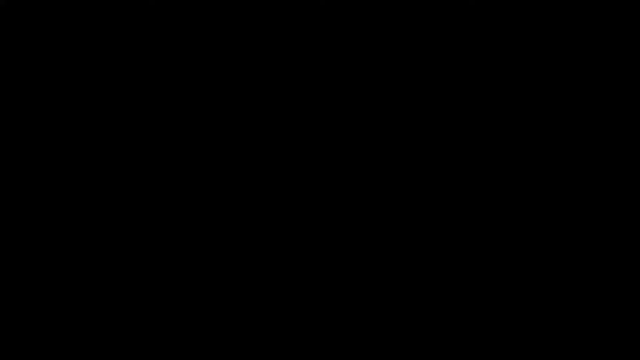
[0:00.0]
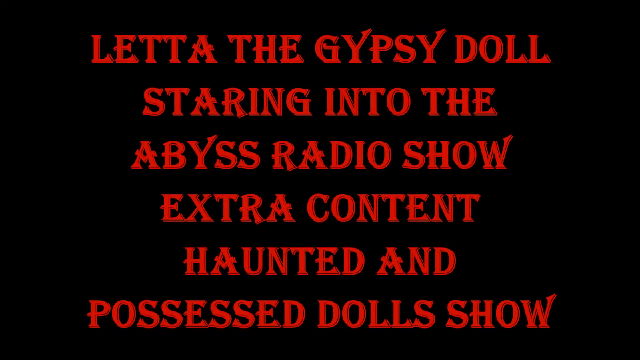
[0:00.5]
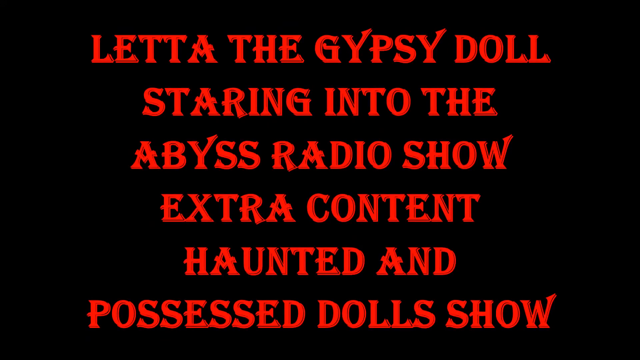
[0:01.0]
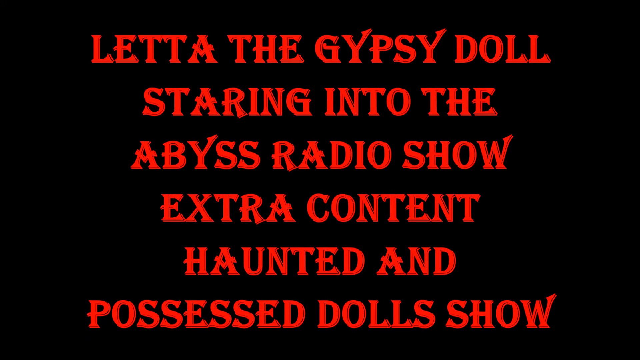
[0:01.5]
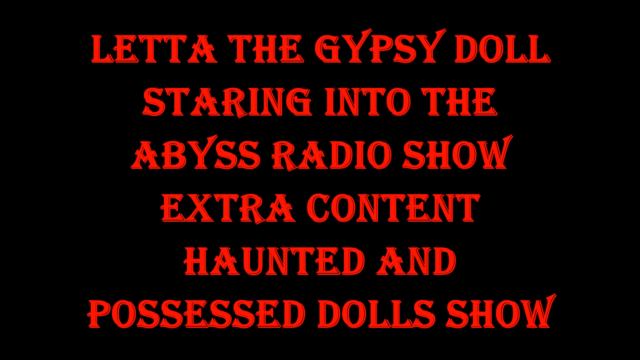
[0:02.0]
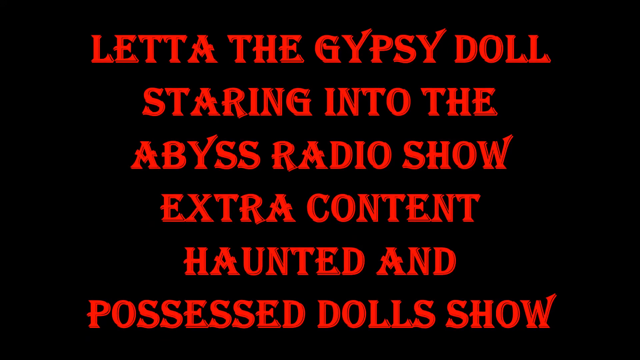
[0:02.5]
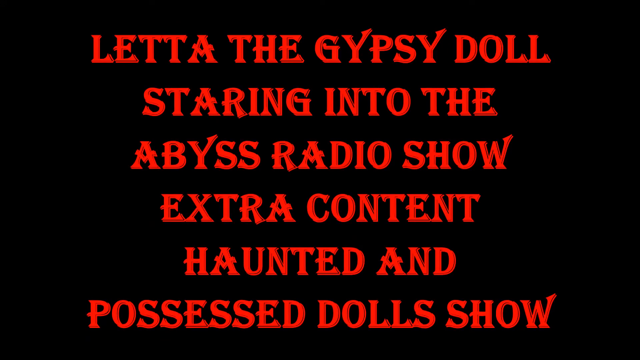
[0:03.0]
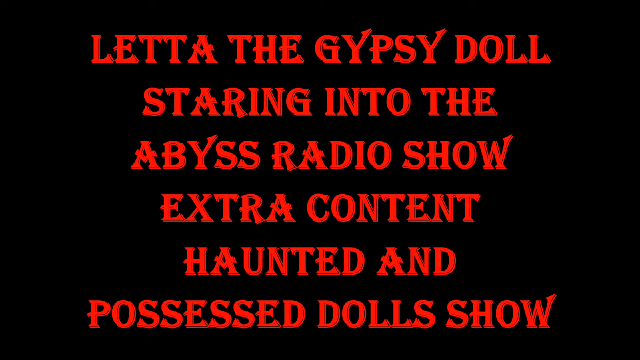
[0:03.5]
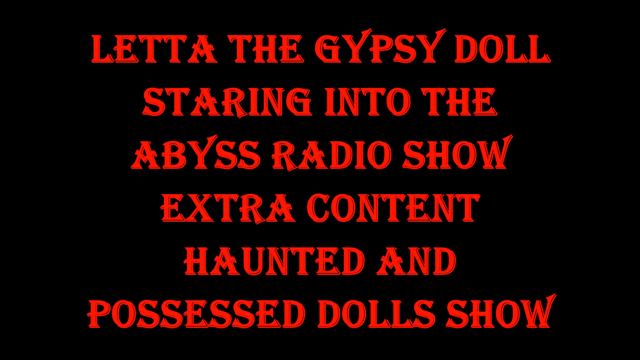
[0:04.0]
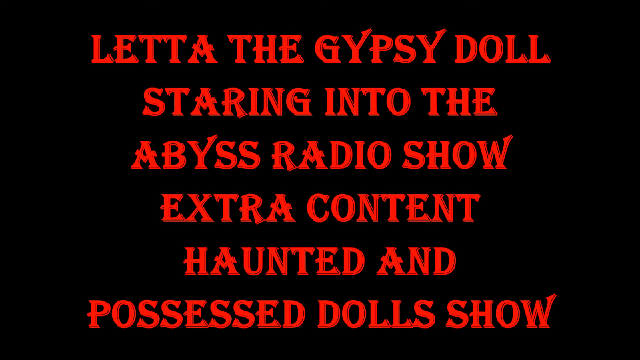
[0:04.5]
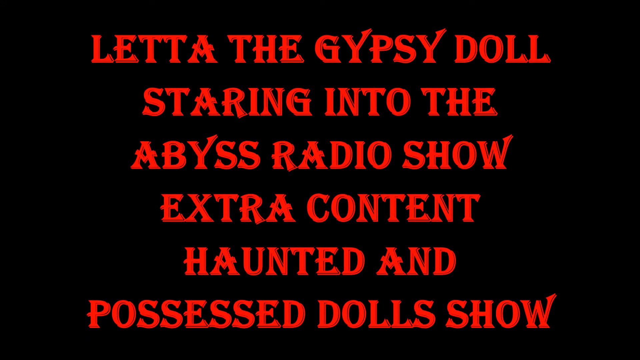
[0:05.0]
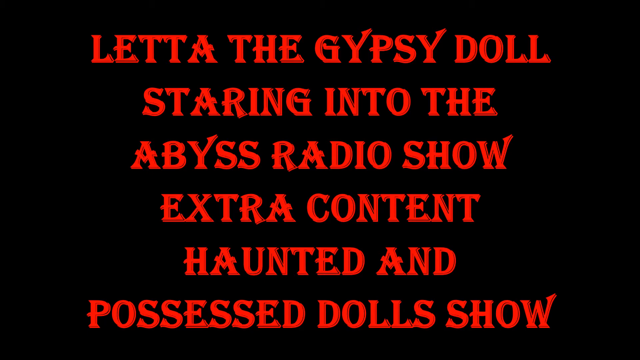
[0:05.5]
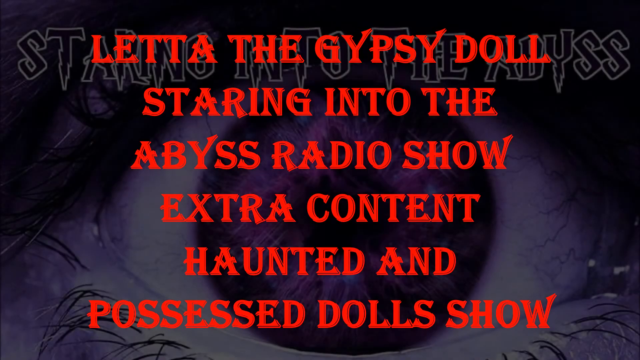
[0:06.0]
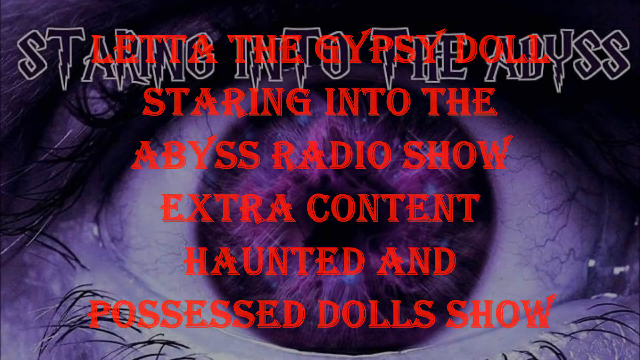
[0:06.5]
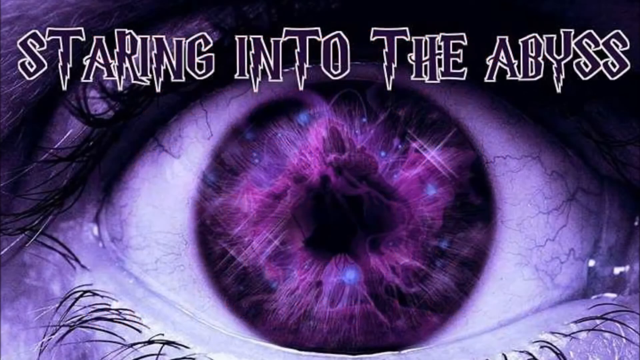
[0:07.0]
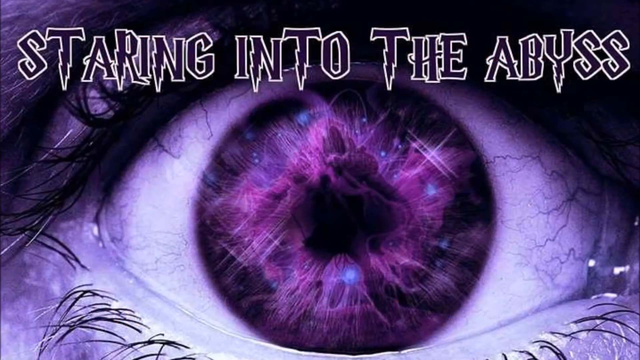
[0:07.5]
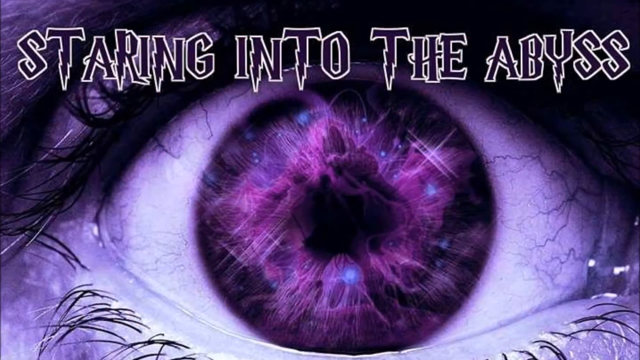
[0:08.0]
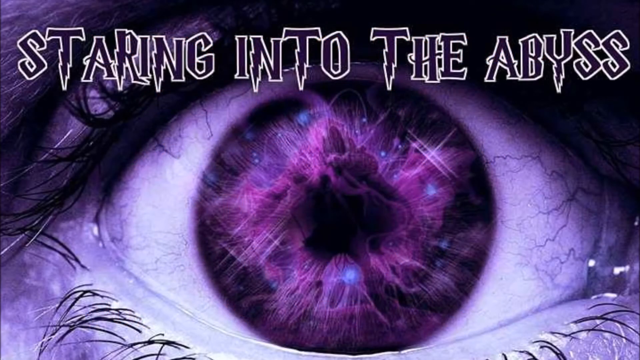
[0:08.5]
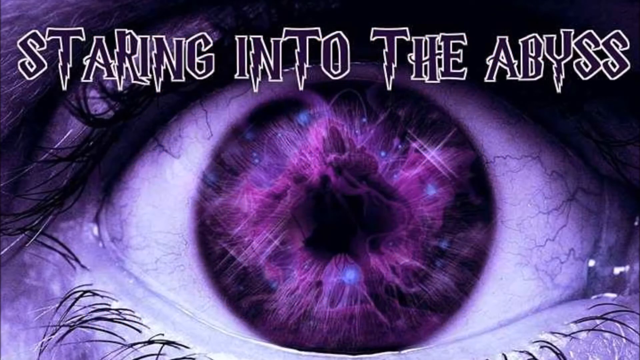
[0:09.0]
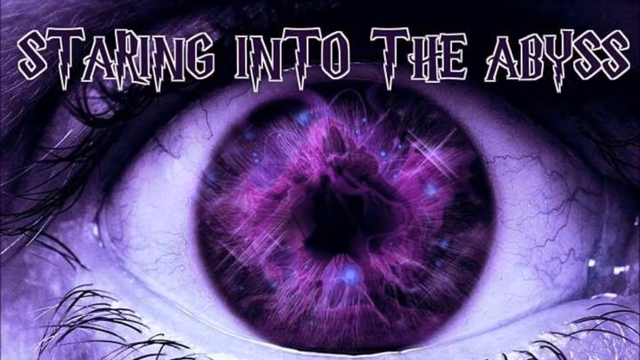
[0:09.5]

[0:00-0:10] Text on a black screen begins with "let the gypsy doll" and continues "staring into the abyss radio show extra content haunted and possessed dolls show". Another screen shows a picture of an eyeball whose center is filled with purple galaxy-like material; eyebrows and a little of the shape of a face are visible. The words "staring into the abyss" appear in a purple font.